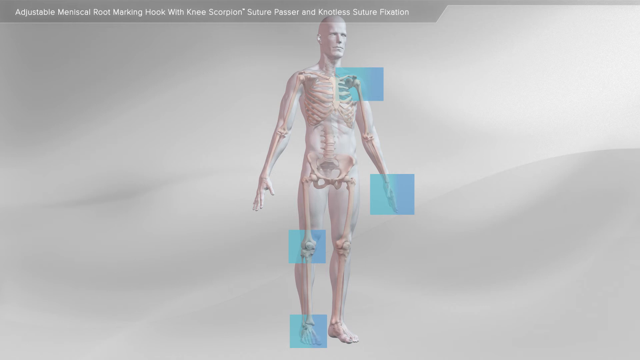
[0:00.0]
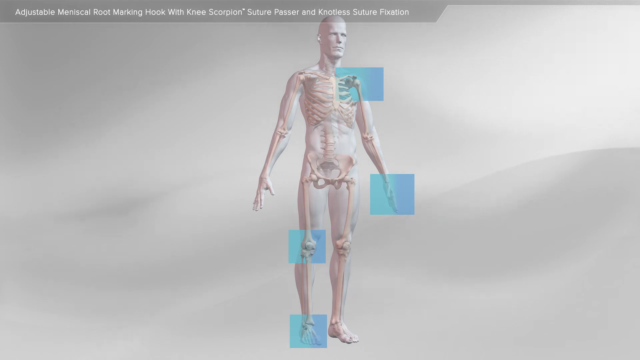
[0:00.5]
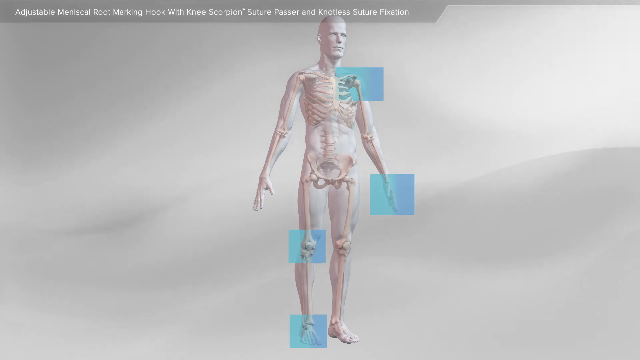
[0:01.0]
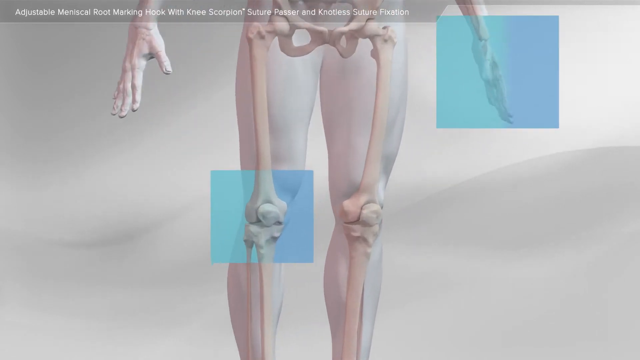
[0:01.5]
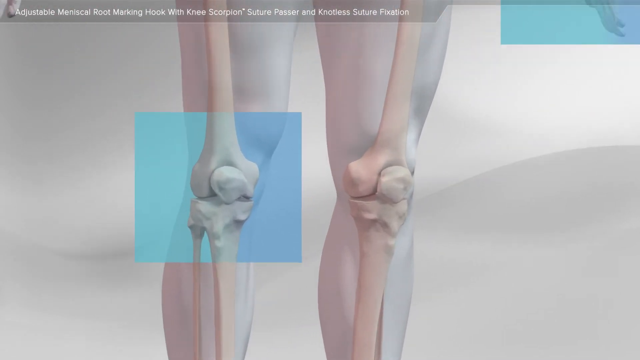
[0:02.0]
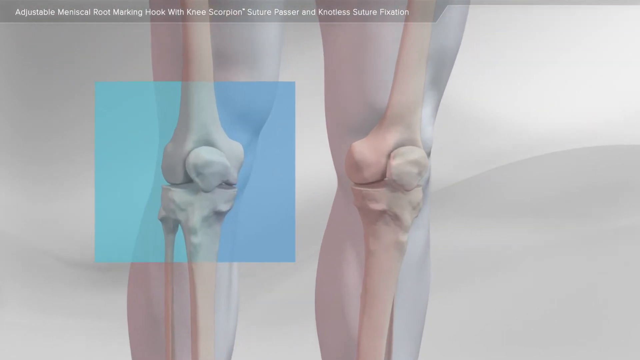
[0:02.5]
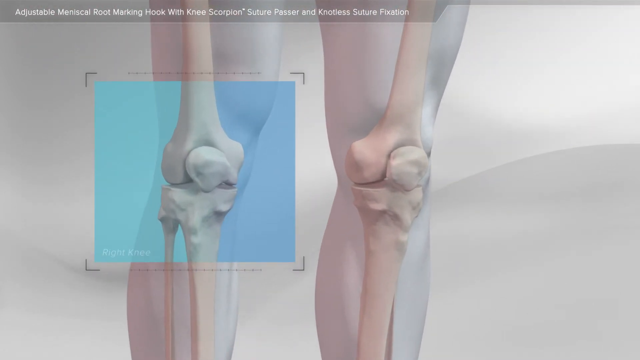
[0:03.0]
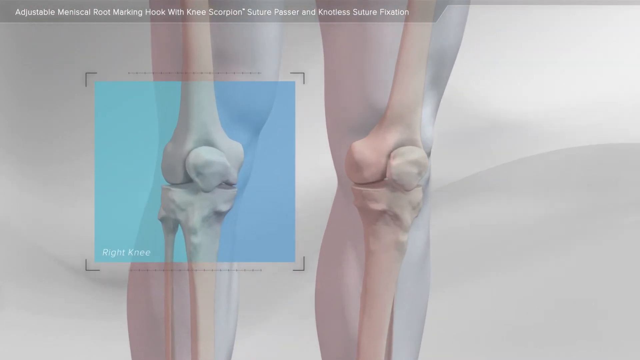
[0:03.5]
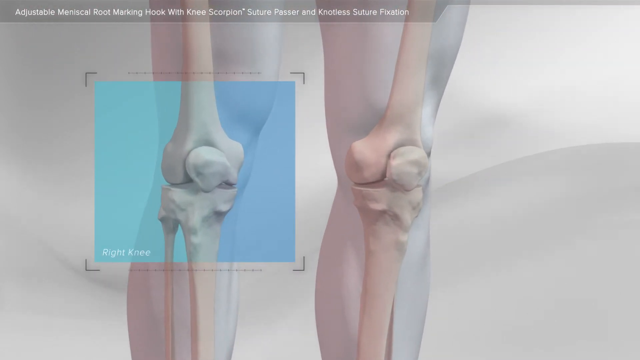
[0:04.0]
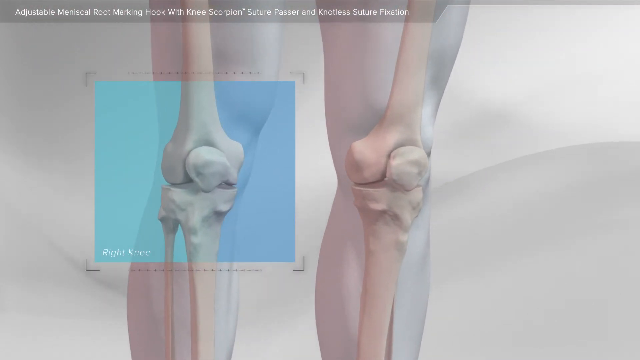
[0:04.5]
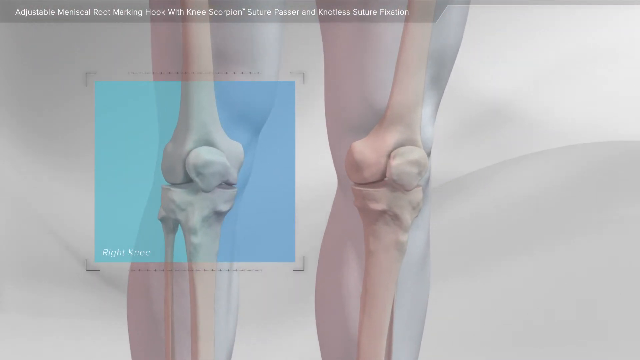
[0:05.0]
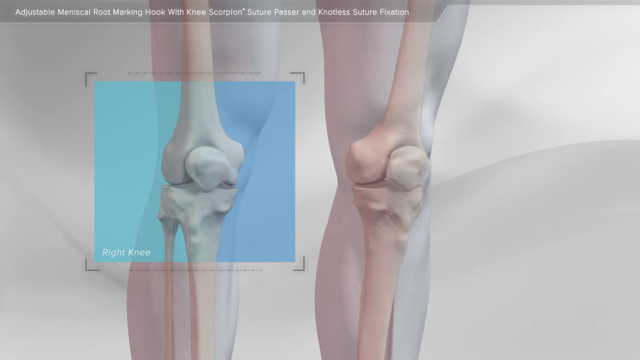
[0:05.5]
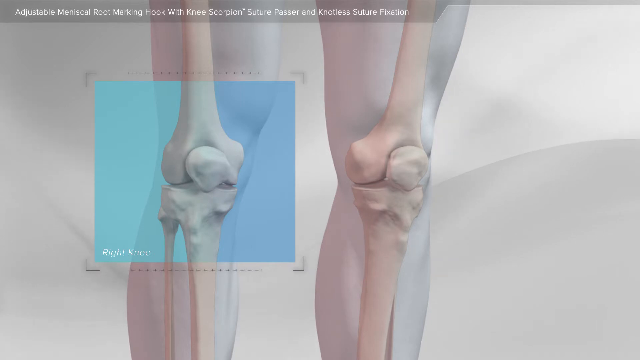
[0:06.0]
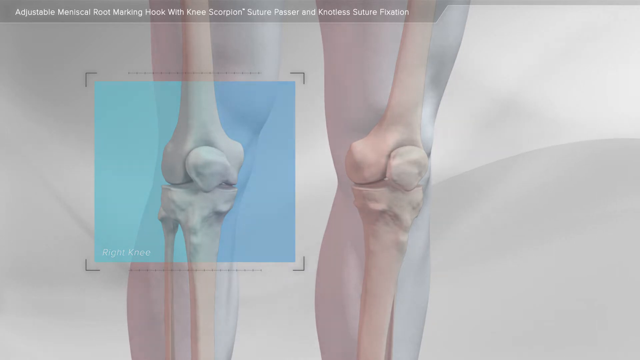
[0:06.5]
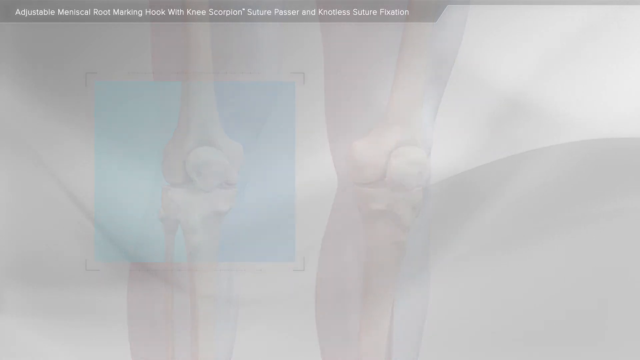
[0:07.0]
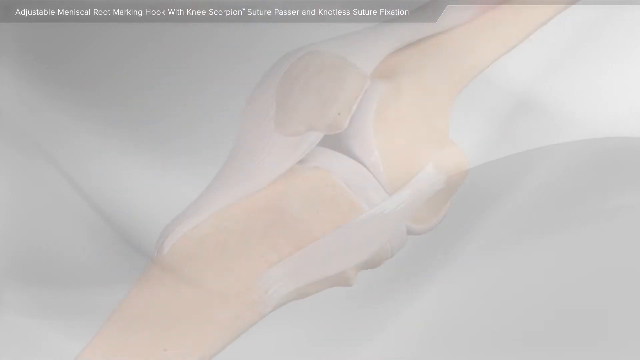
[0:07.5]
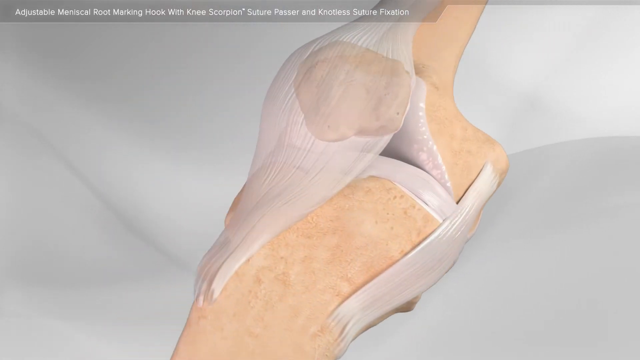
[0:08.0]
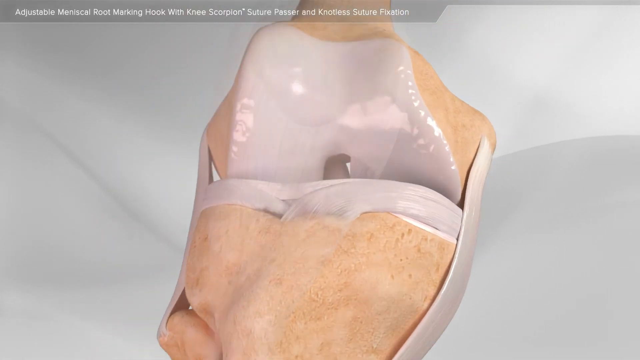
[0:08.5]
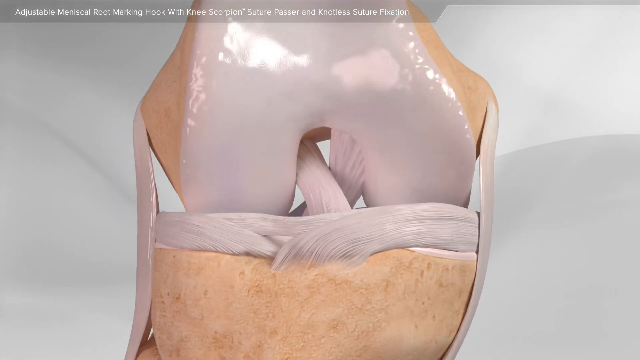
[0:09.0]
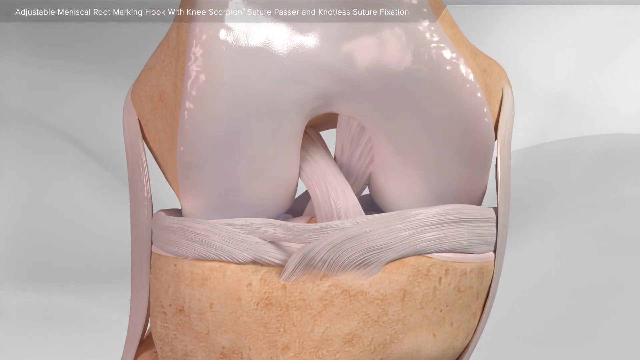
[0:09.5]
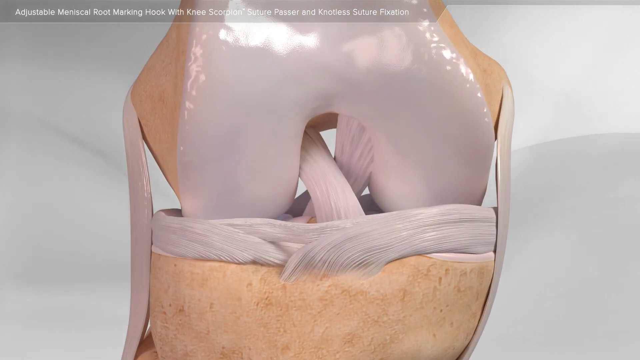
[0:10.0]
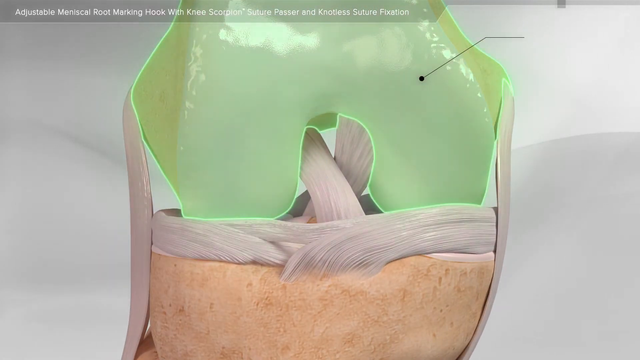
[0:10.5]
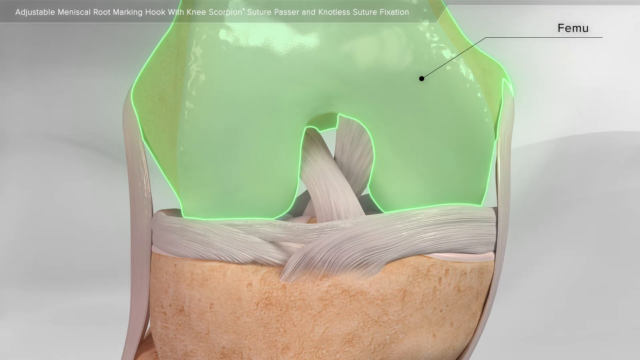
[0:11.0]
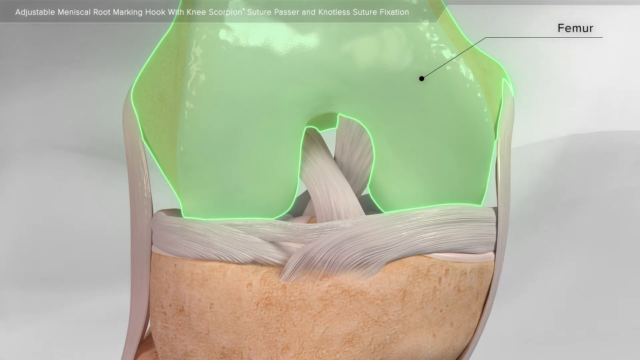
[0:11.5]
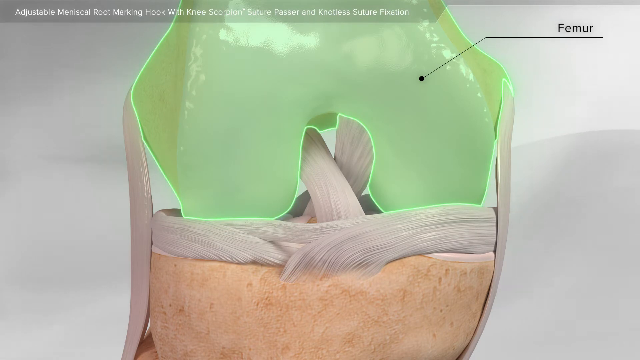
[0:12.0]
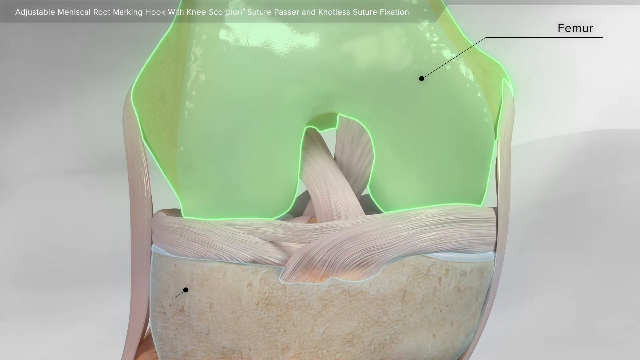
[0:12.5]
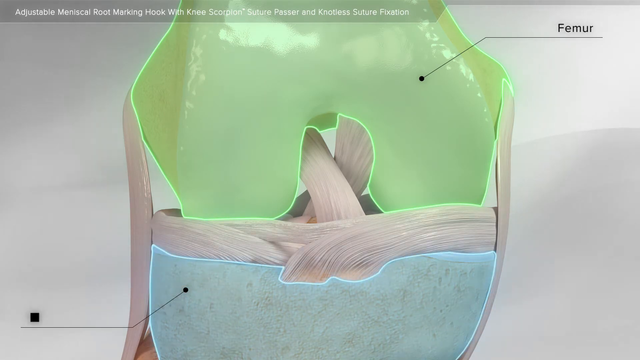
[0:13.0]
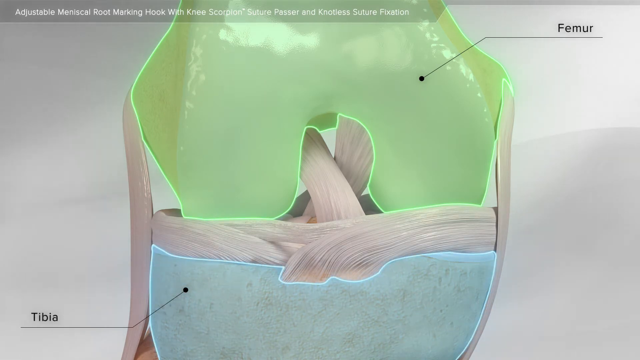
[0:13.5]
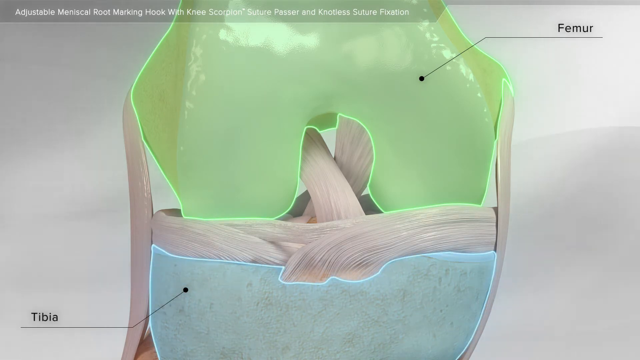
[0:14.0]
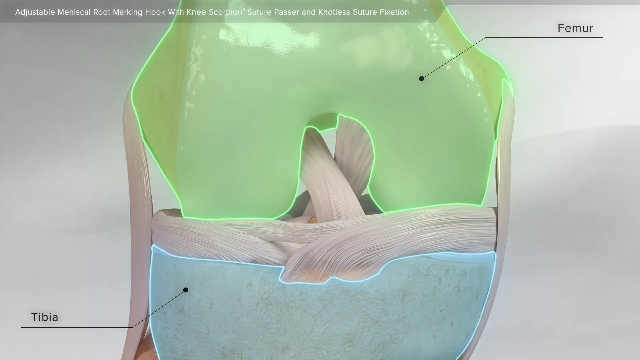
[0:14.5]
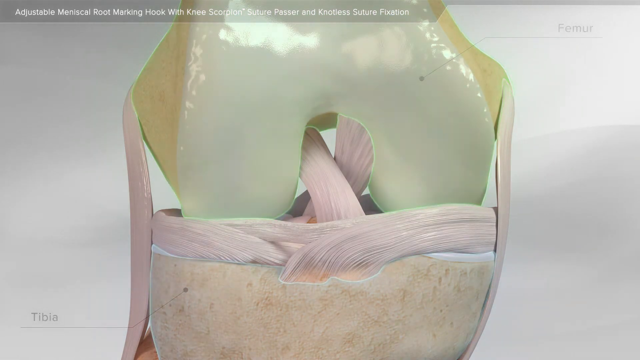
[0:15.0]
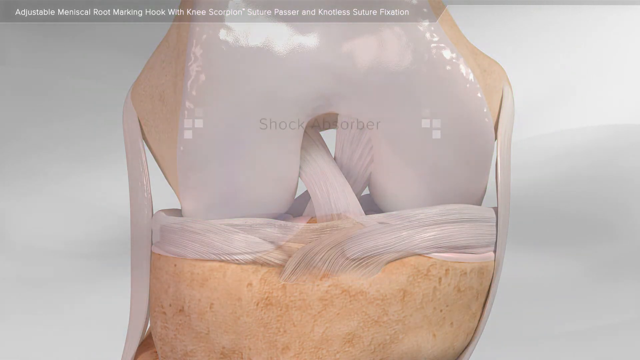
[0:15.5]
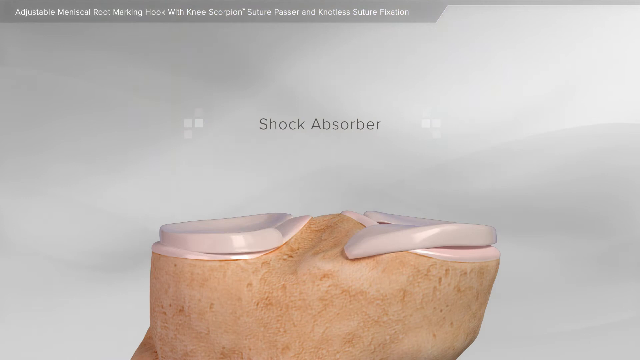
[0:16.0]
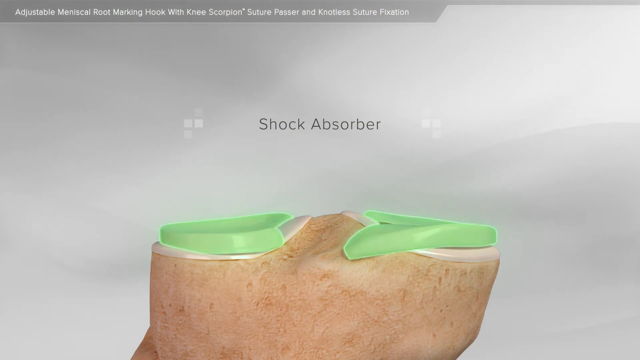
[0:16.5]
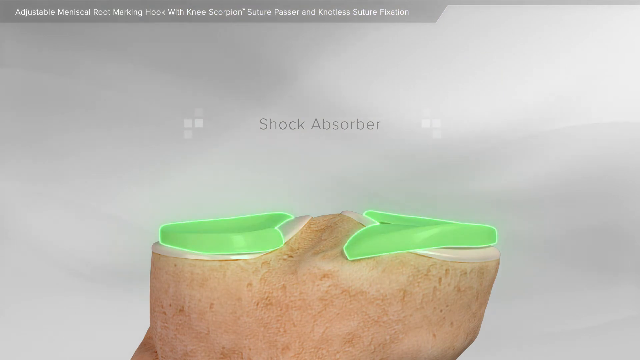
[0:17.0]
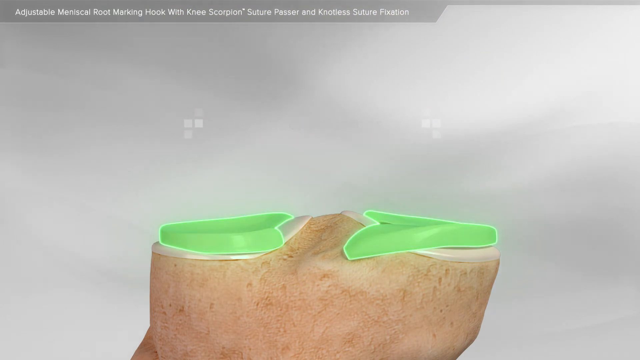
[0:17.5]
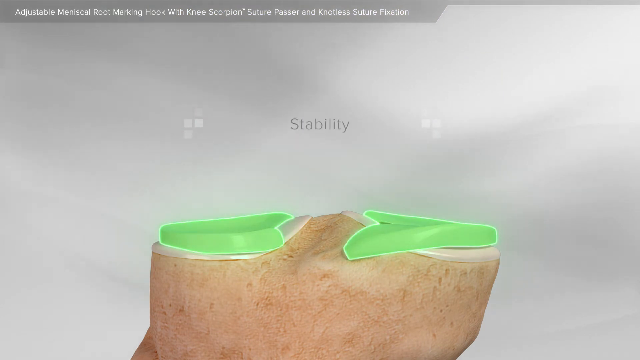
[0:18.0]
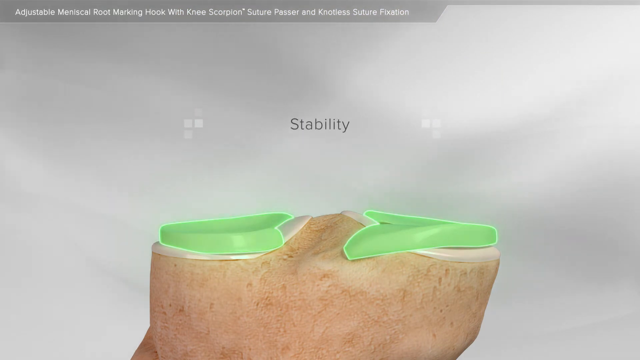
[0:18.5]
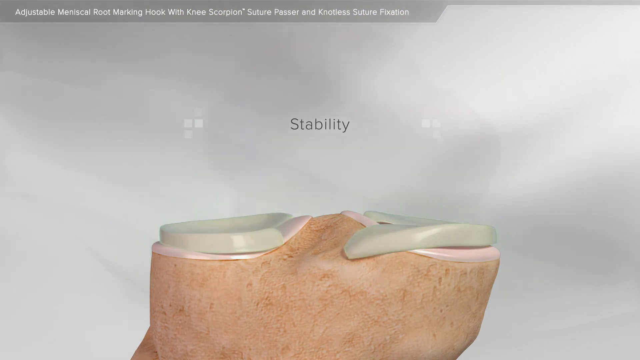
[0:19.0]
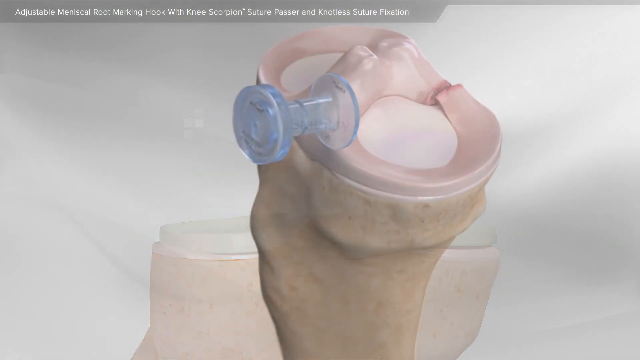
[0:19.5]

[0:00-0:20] The video focuses on a person's knees. It opens on a view of a person's skin and body, shown with an x-ray so the bones and knees are visible. Text at the top reads "adjustable meniscal root marking hook with knee scorpion suture, passer". The view zooms in on the knees. A blue box surrounds the knee on the left (the figure's right knee), with four small frames at the corners highlighting it, and the bottom left corner of the text area says "right knee". The image fades to white, and a knee animation follows in which the knee bends; the knee joint bones look somewhat like white hair with darker bone or skin beneath. The femur area is highlighted in green, with a small tag in the top right corner connected to this green highlight, and the lower part, the tibia, is highlighted in blue. These parts then disappear, and the view fades to show the spots in between: a small gap that was not highlighted before is now highlighted in green, with the femur removed from view. Text reads "shock absorber" for that part, and also "stability".